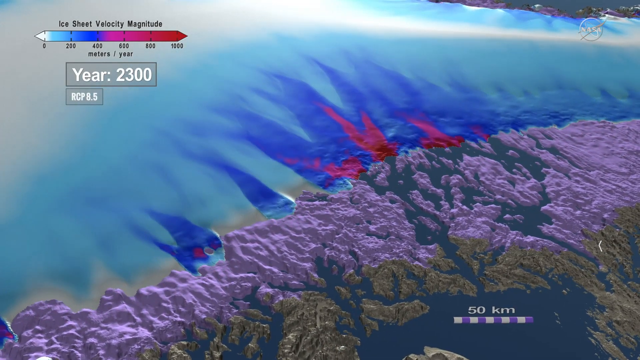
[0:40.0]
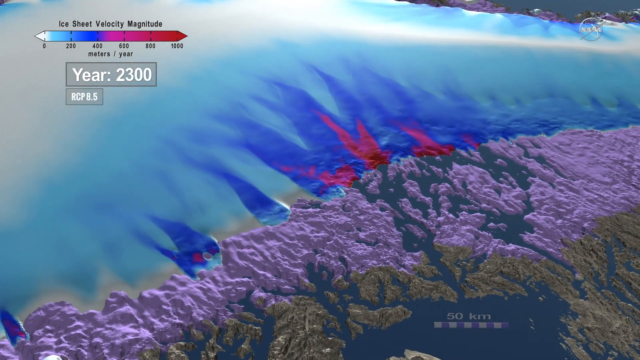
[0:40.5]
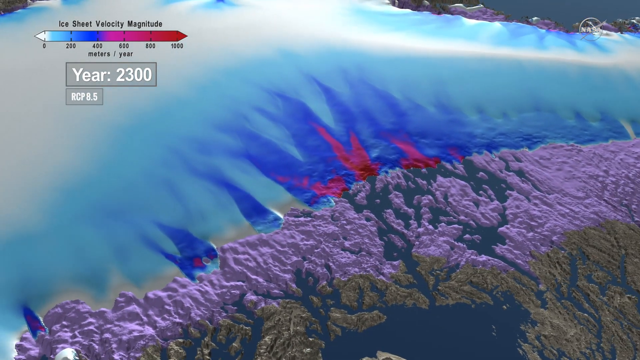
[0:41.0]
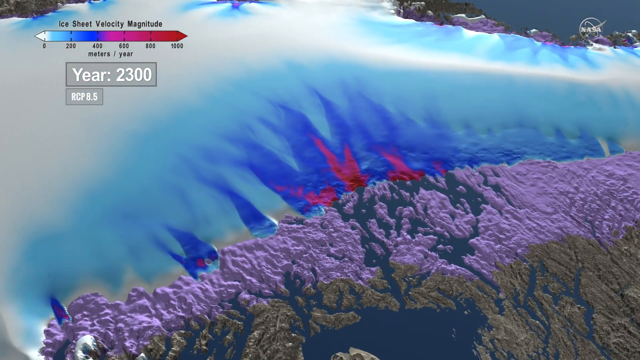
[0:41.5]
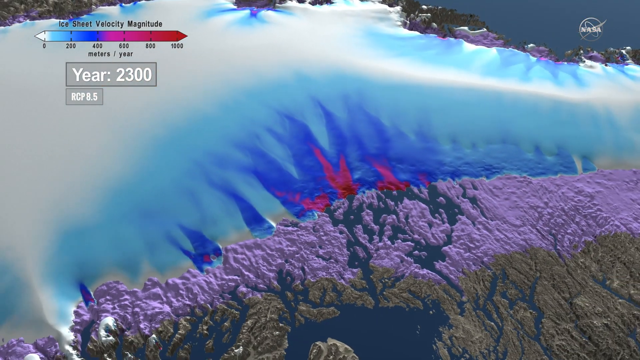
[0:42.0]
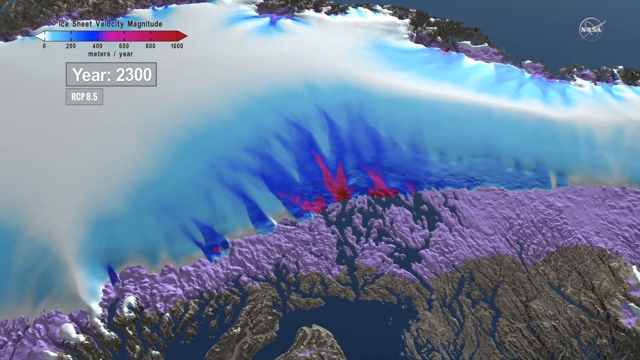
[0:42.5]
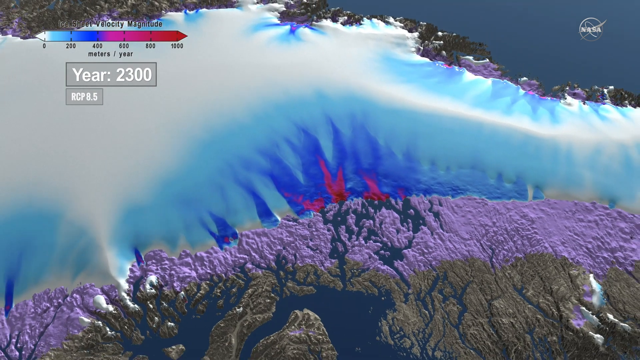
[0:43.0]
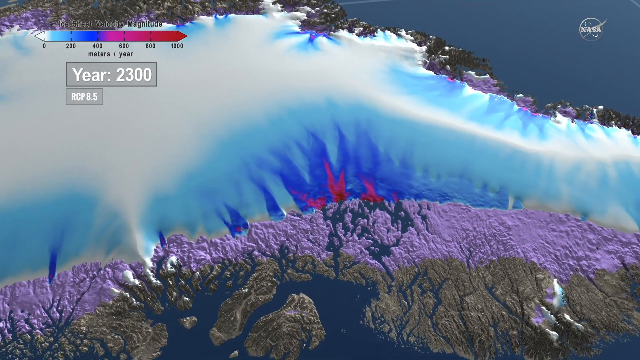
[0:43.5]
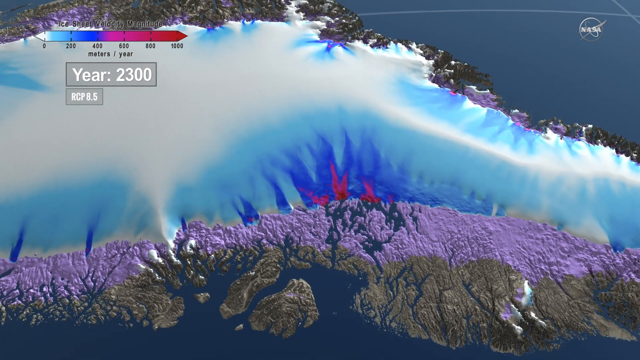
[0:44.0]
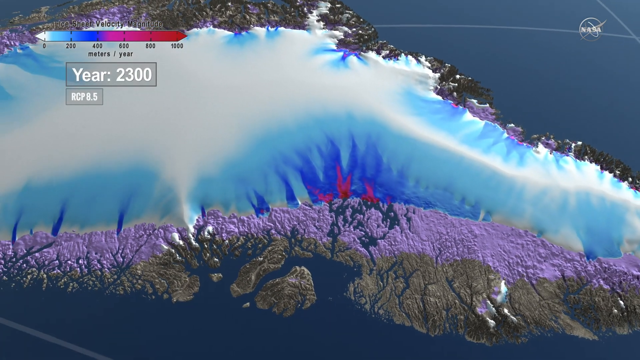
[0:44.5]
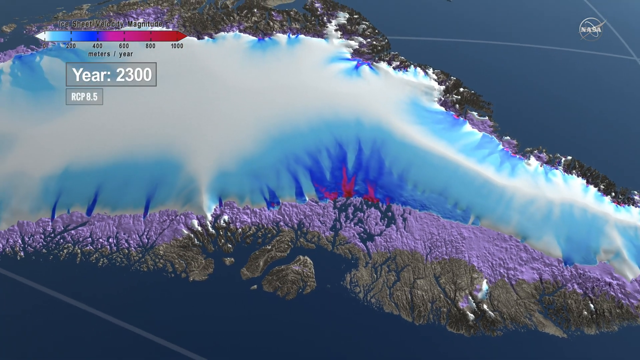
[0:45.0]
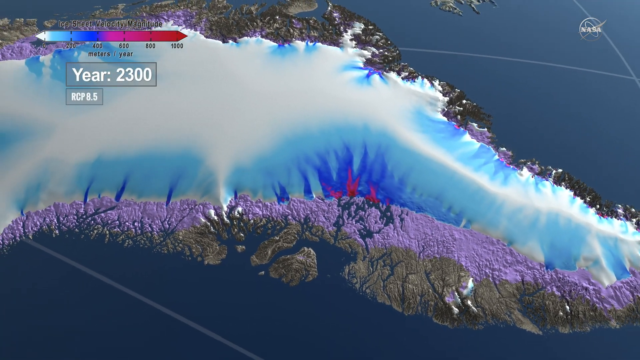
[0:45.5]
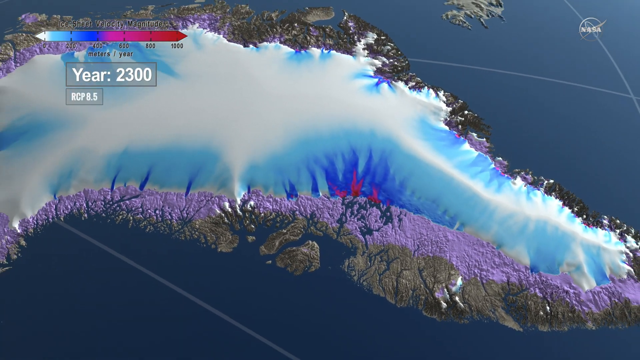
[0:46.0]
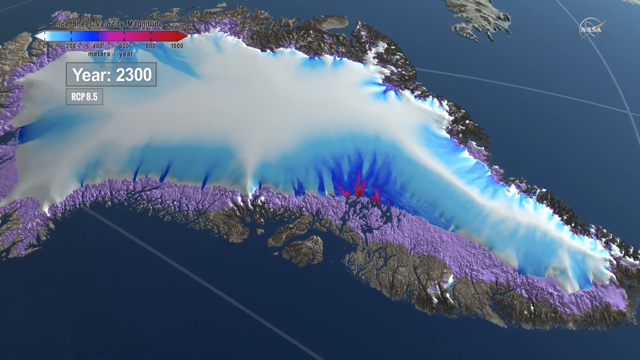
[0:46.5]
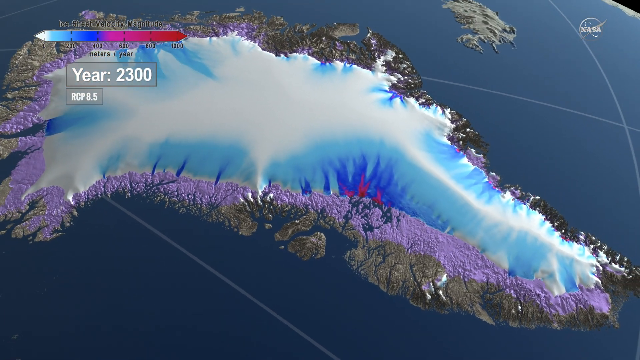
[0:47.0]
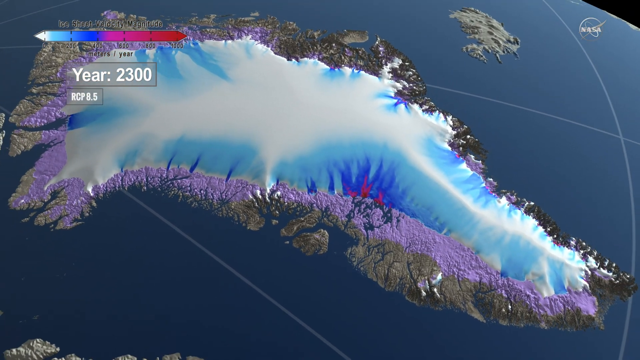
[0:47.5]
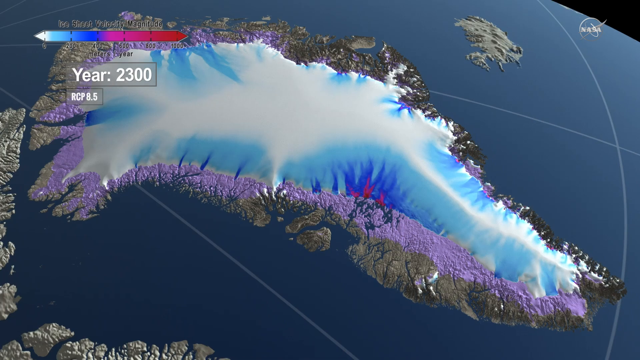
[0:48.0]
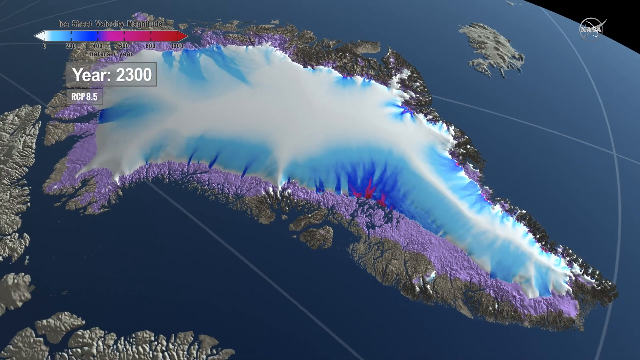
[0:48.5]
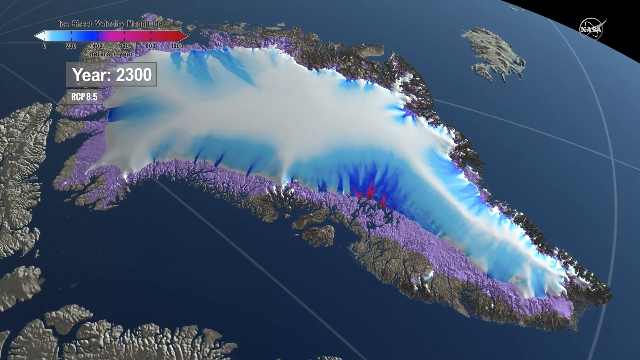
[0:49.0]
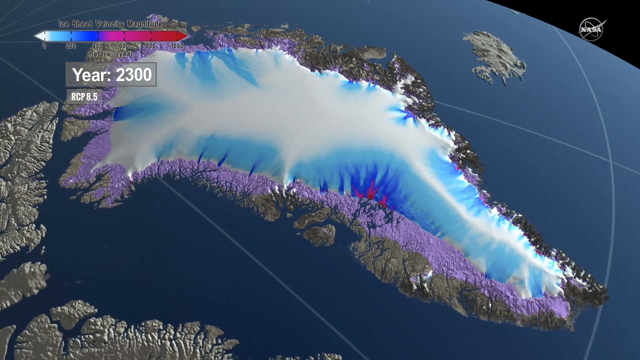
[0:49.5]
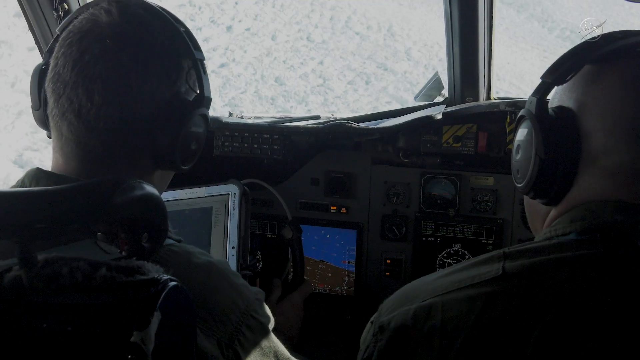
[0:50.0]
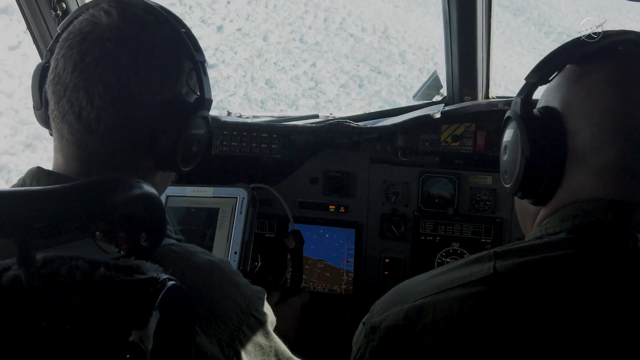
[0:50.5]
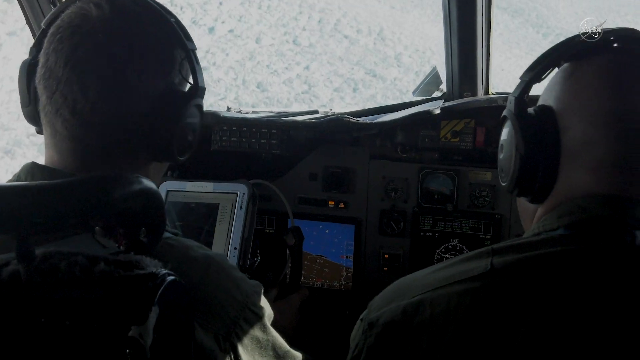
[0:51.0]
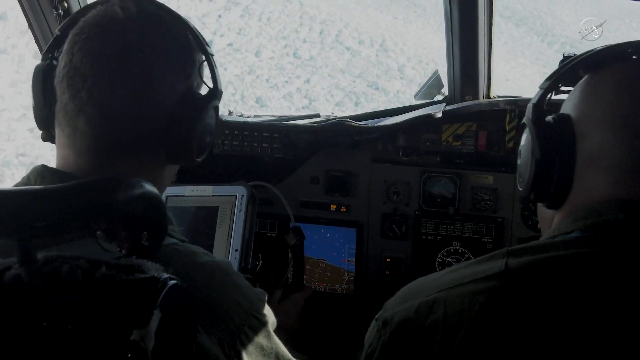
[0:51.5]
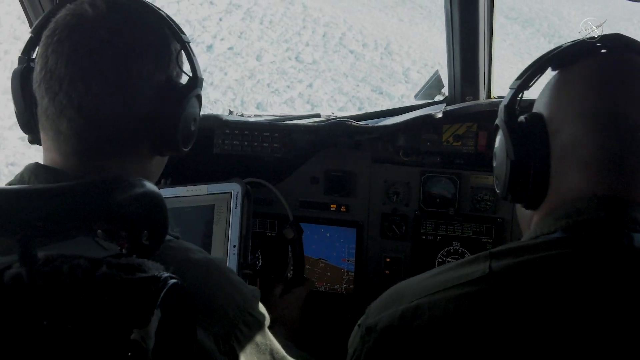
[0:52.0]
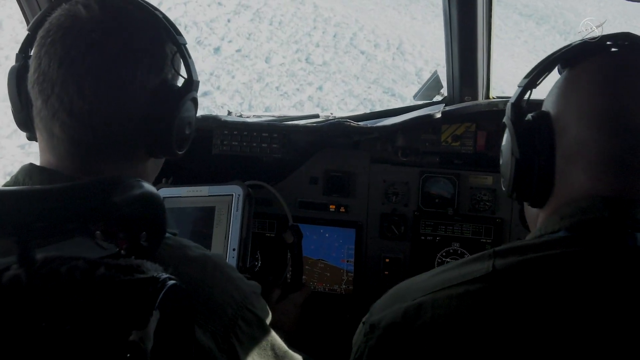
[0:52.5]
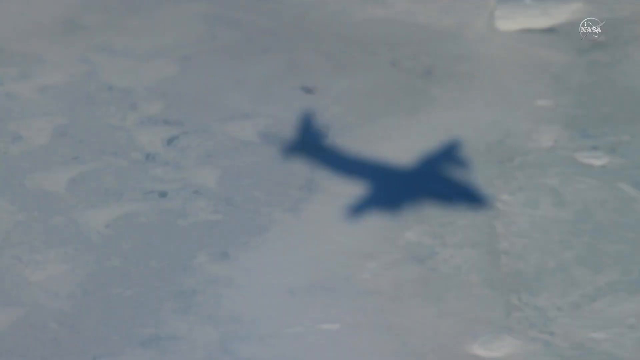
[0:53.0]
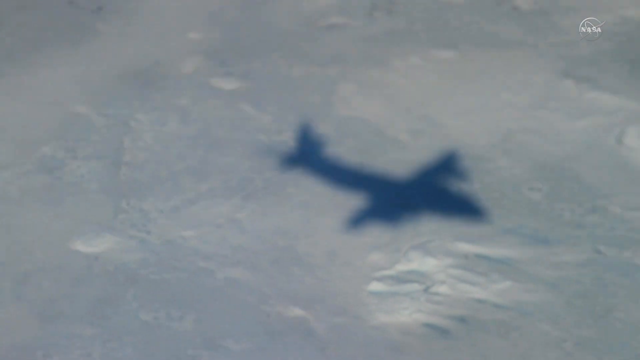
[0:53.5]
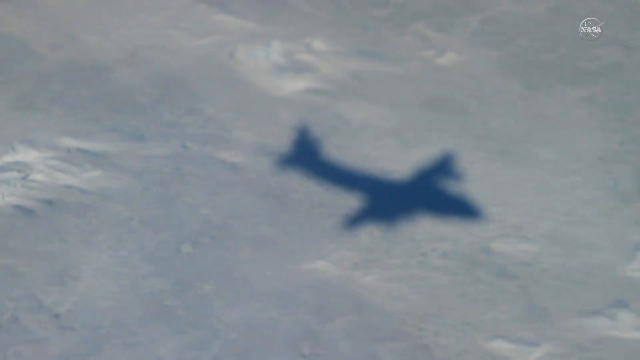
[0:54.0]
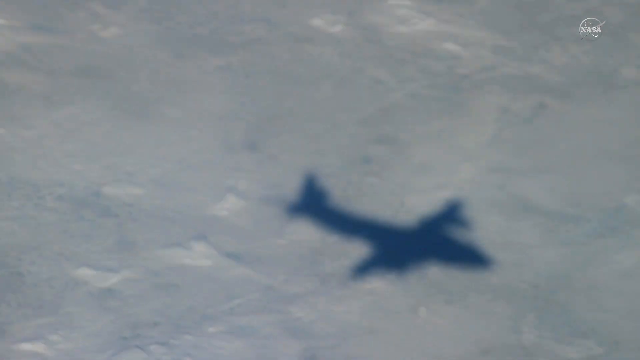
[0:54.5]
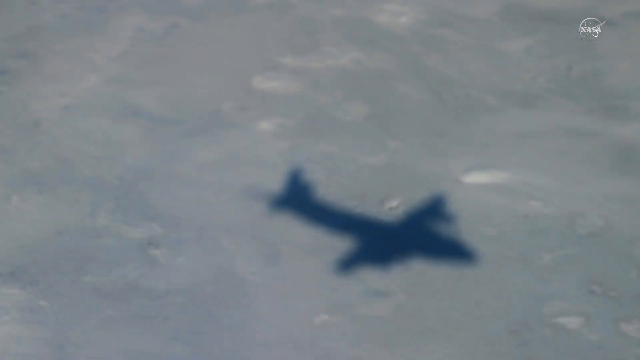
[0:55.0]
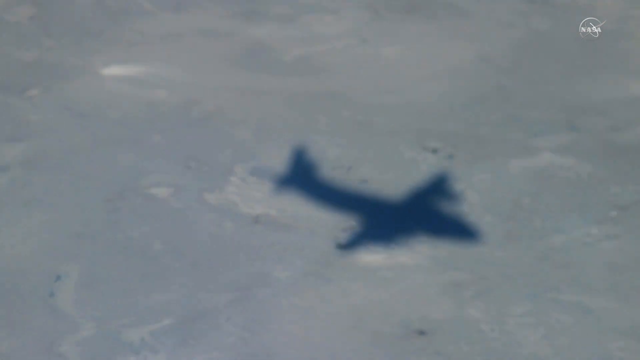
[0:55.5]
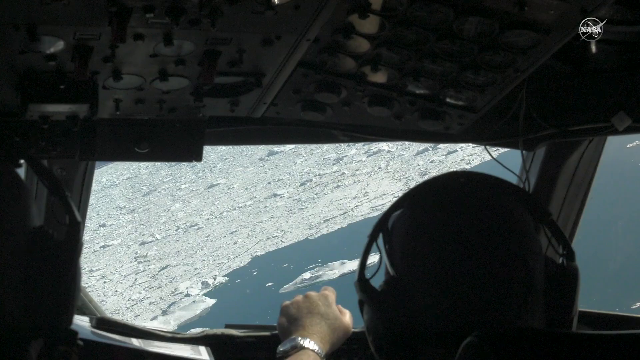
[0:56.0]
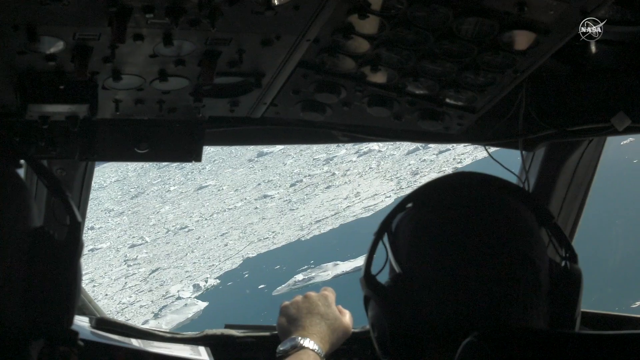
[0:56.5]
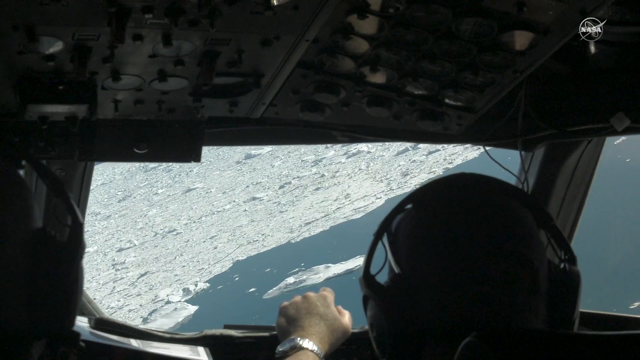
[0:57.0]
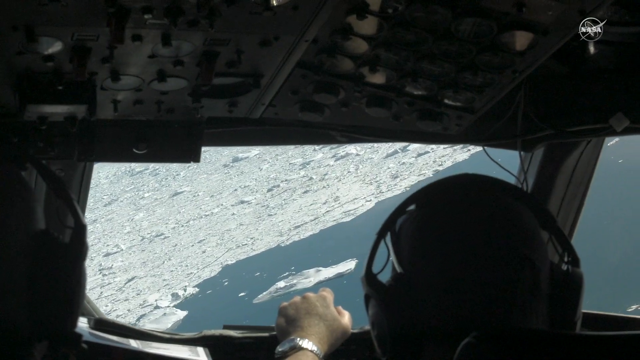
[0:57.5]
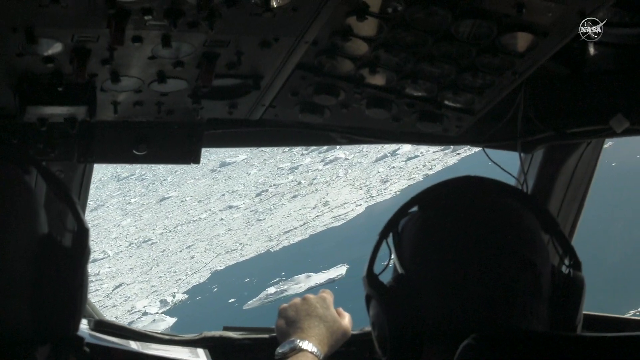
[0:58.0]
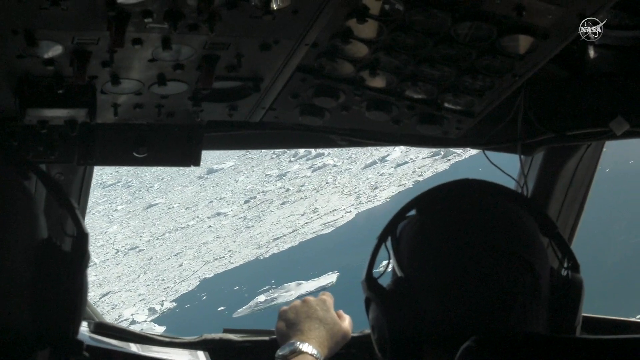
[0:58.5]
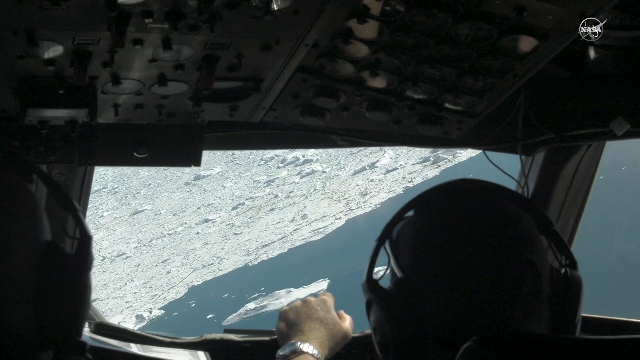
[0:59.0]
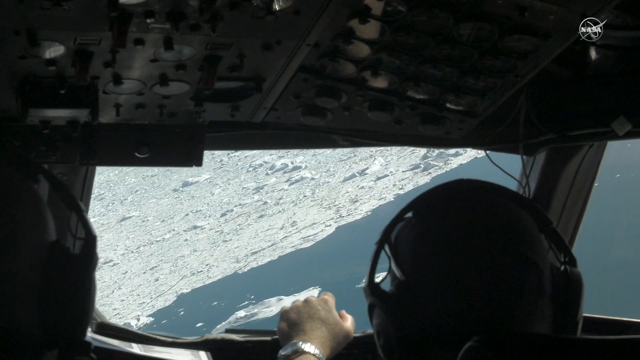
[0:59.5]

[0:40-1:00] An area in Alaska where the ice sheets are receding is shown. In the lower part of the image is a green area with water around it, and just above it is a purple area, the area where the ice sheets have been receding. Above that are the large ice sheets, white and blue in color. A key in the upper left corner indicates what the area would look like in 2023 according to this climate model. The shot keeps pulling back farther and farther, revealing a huge island in the Alaskan area. A plane flies above the ice sheets, and eventually the plane's shadow appears on the large ice sheets below. A view out the cockpit of the airplane in flight shows the ocean to the right and the large ice sheets to the left.